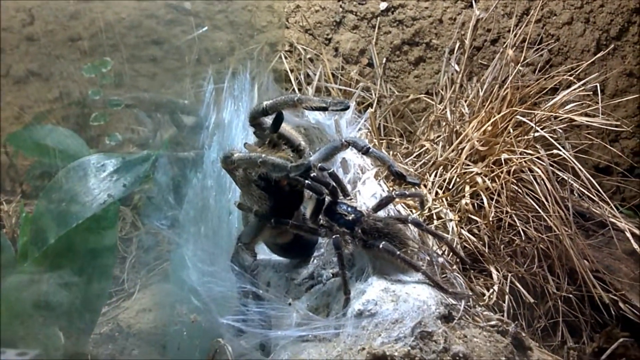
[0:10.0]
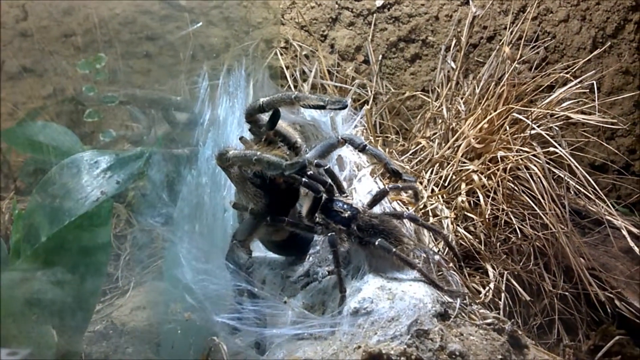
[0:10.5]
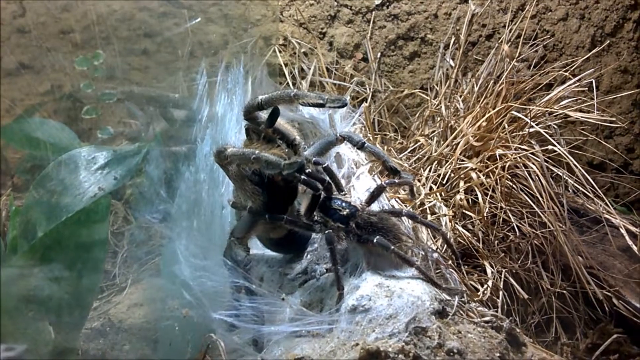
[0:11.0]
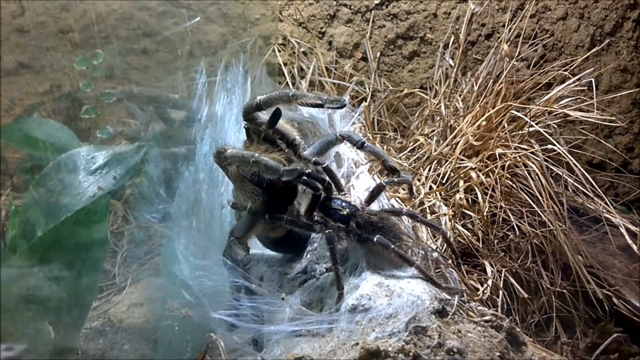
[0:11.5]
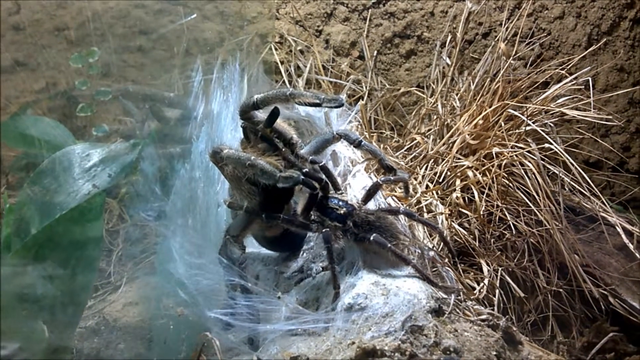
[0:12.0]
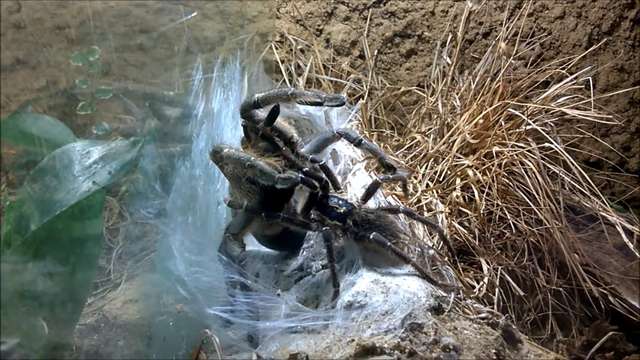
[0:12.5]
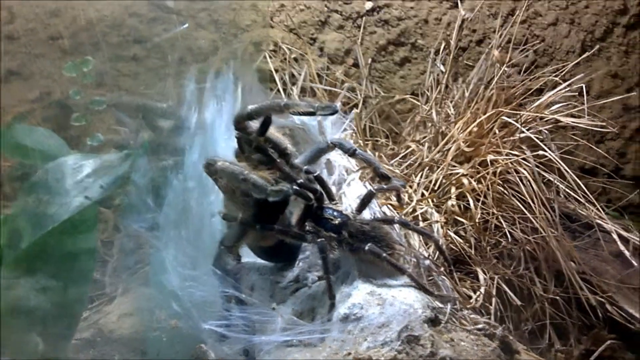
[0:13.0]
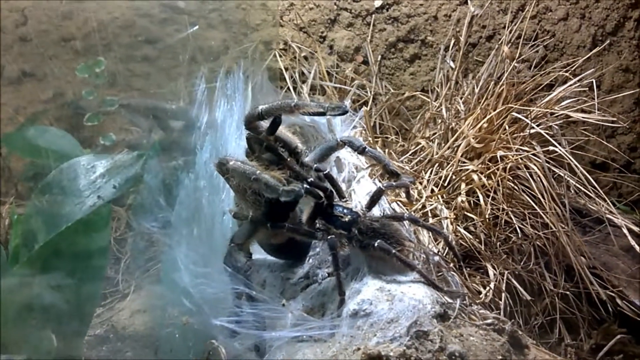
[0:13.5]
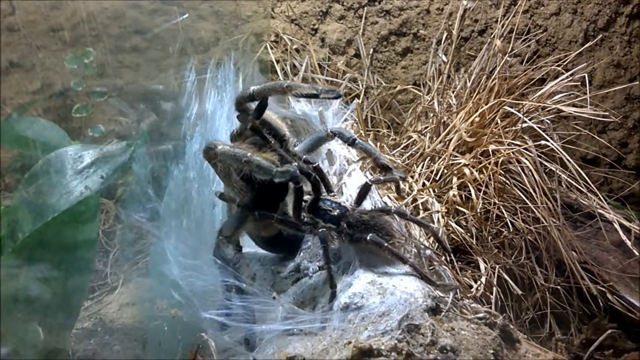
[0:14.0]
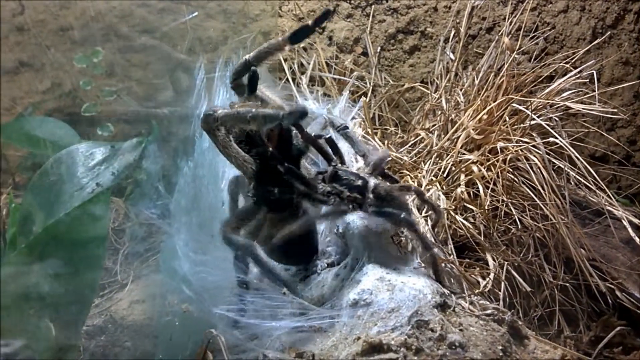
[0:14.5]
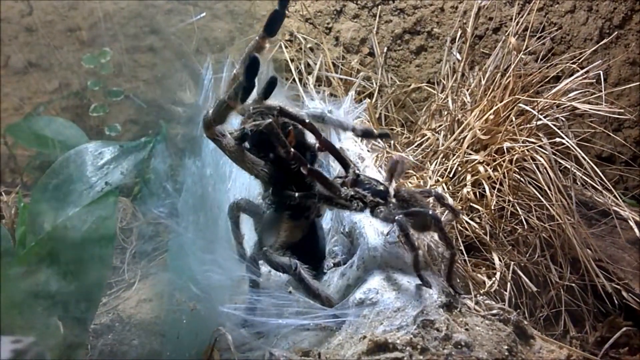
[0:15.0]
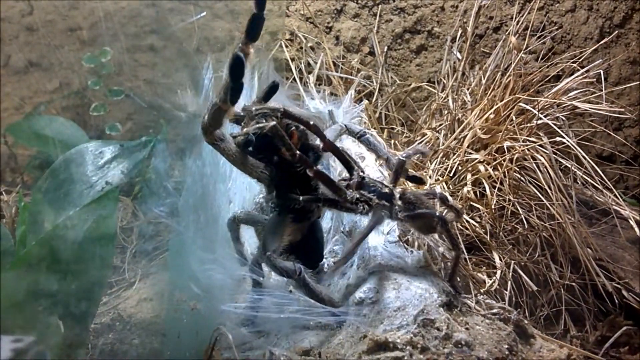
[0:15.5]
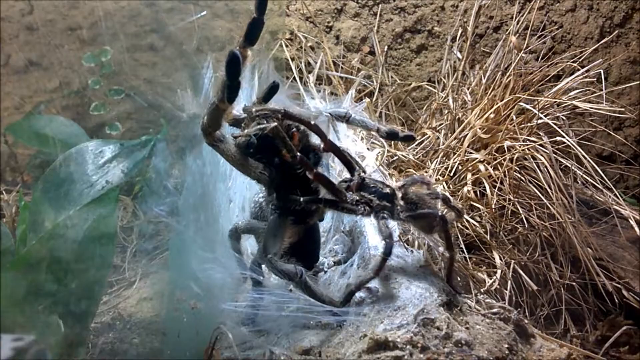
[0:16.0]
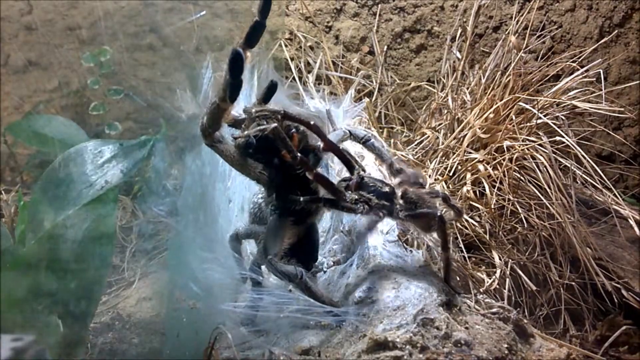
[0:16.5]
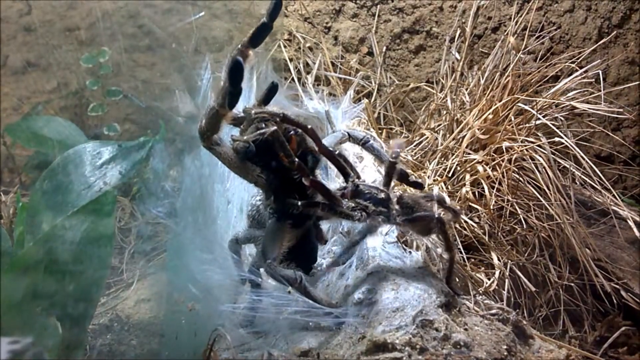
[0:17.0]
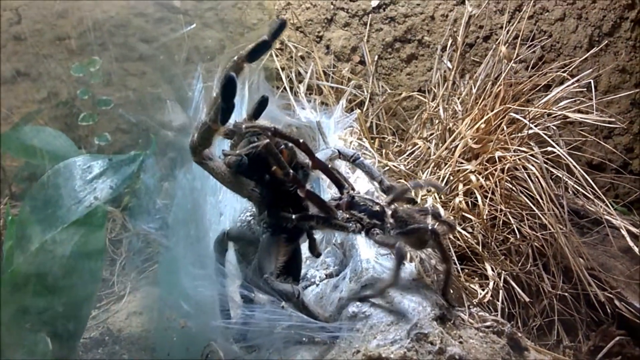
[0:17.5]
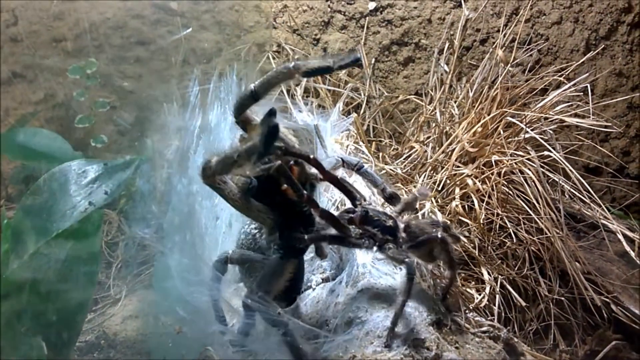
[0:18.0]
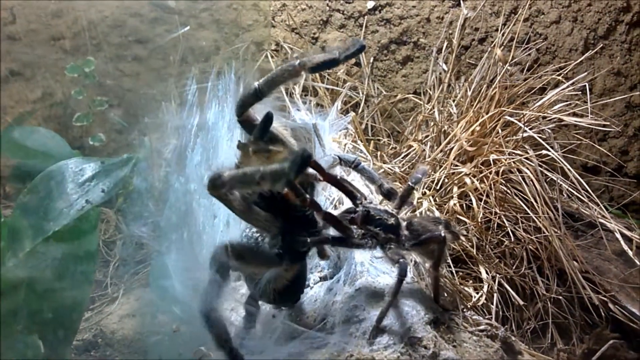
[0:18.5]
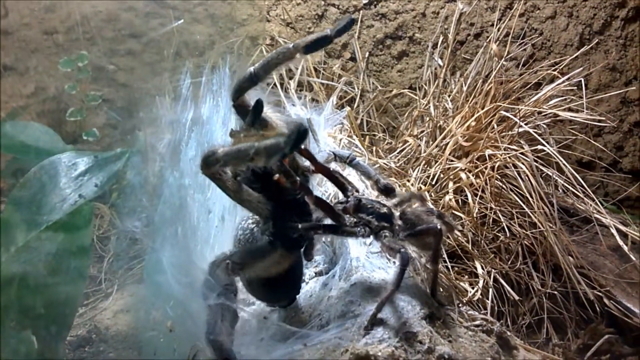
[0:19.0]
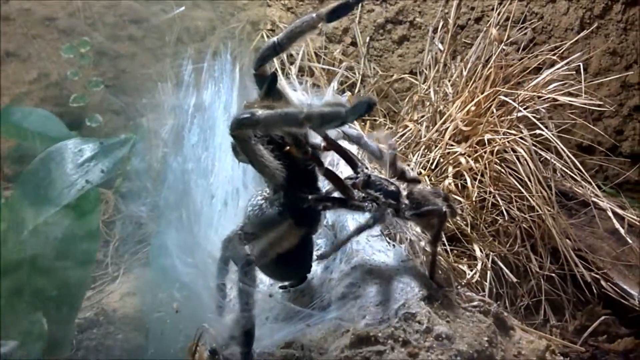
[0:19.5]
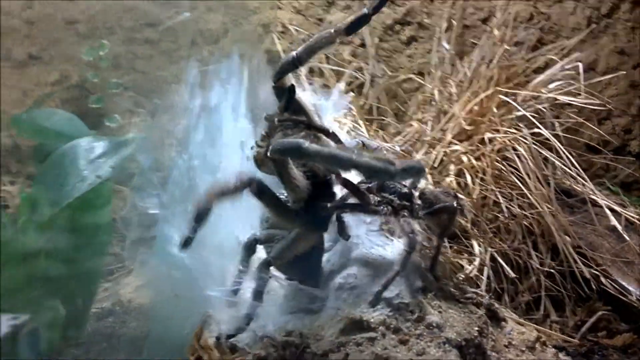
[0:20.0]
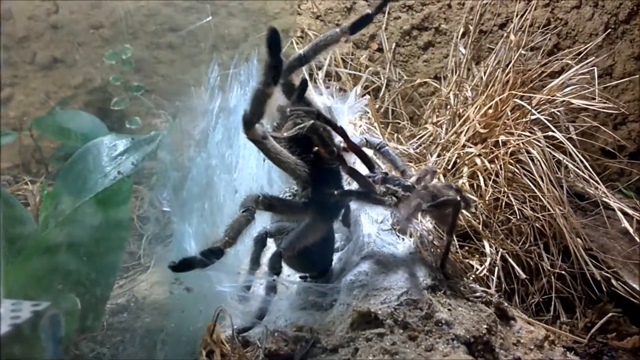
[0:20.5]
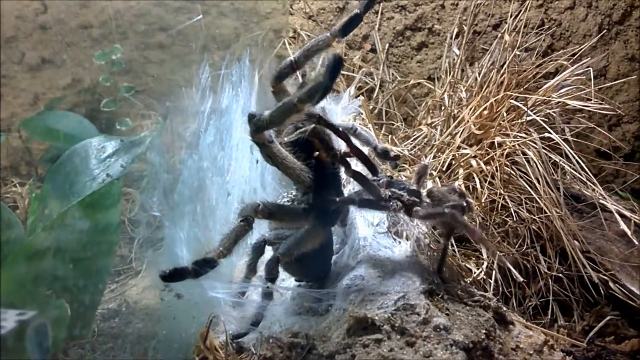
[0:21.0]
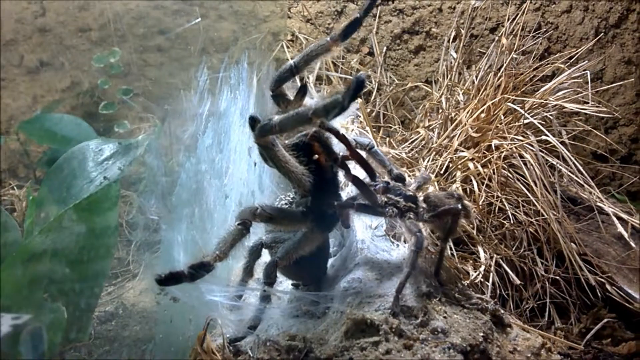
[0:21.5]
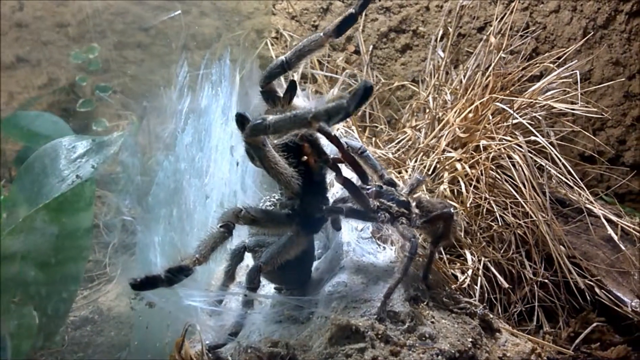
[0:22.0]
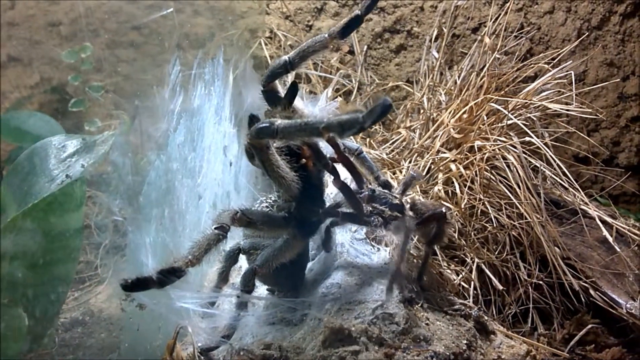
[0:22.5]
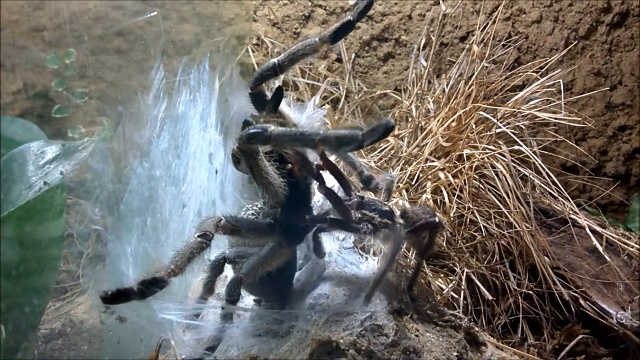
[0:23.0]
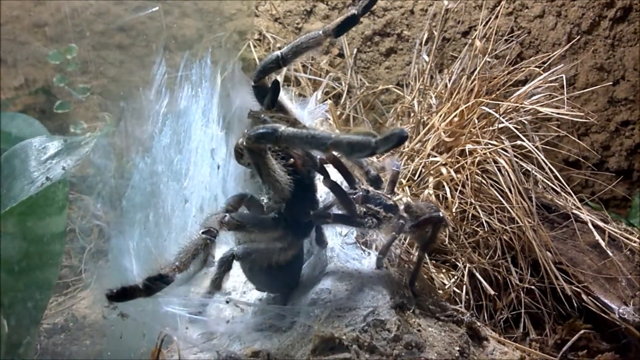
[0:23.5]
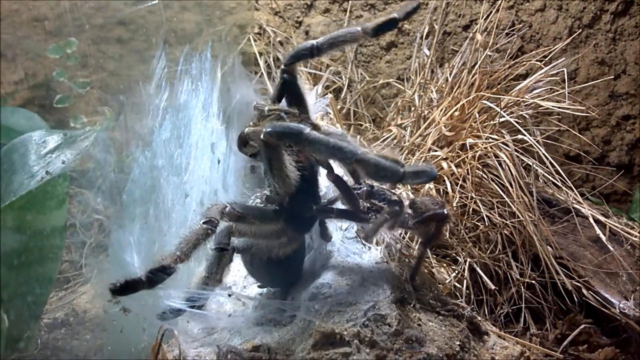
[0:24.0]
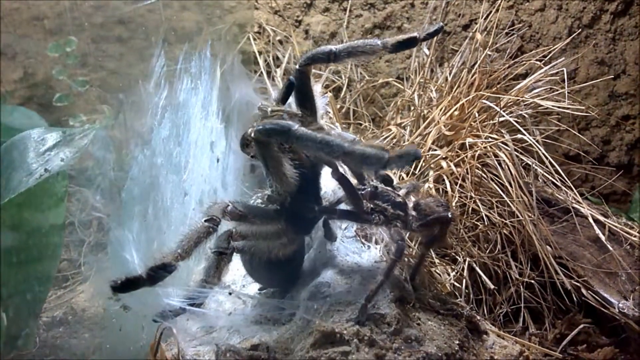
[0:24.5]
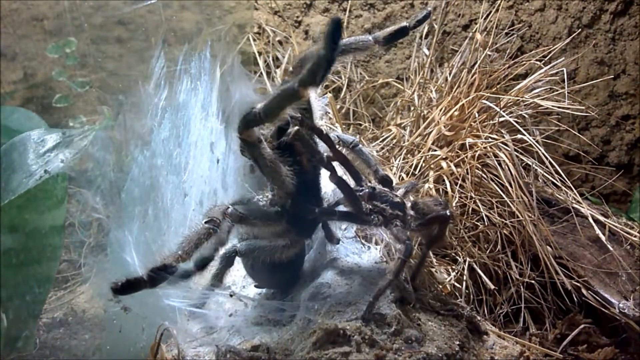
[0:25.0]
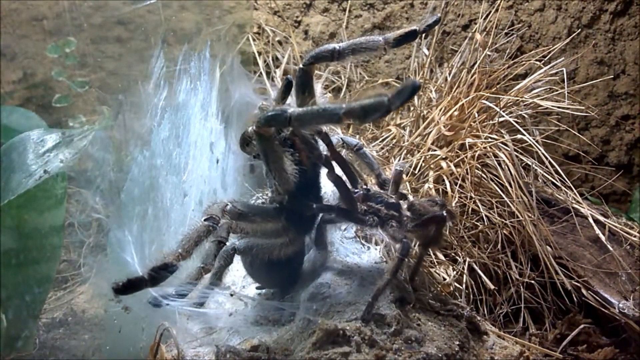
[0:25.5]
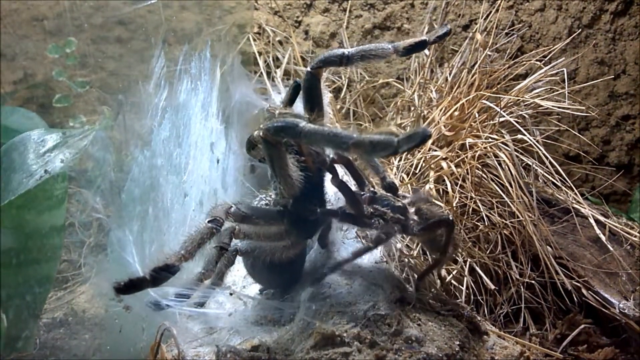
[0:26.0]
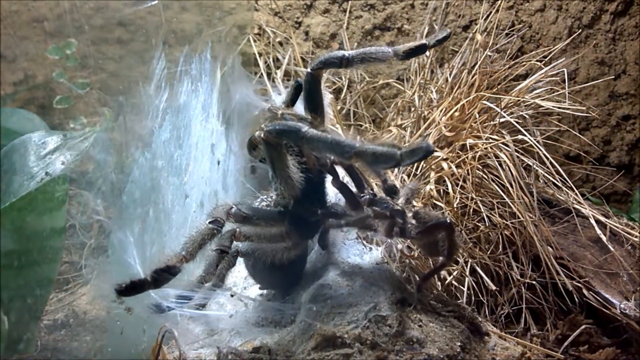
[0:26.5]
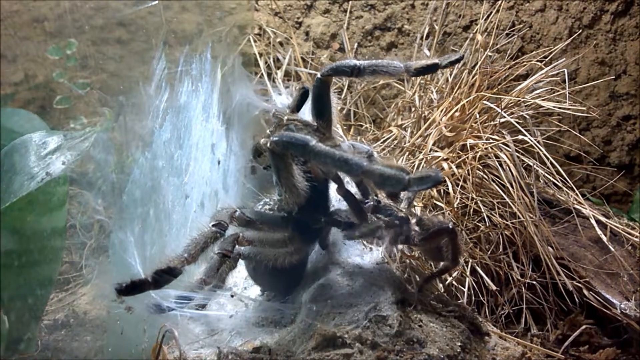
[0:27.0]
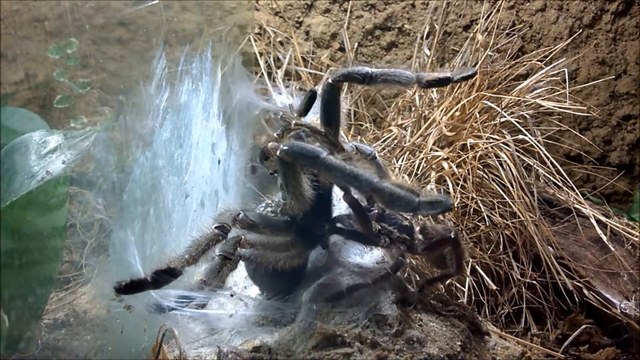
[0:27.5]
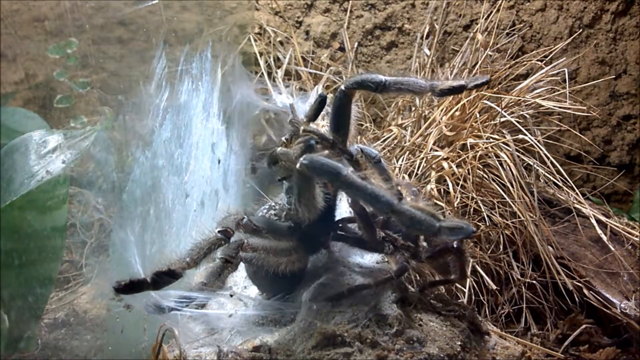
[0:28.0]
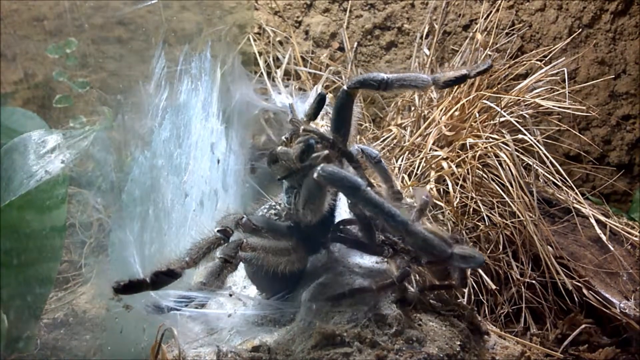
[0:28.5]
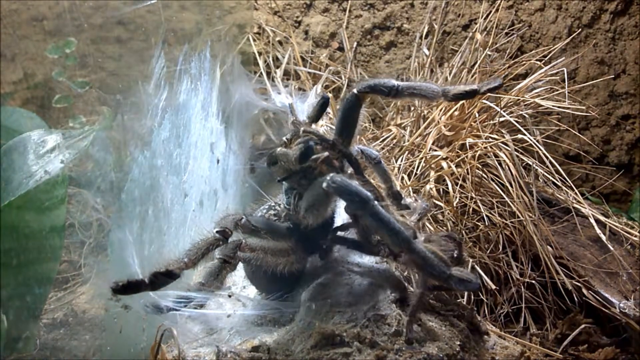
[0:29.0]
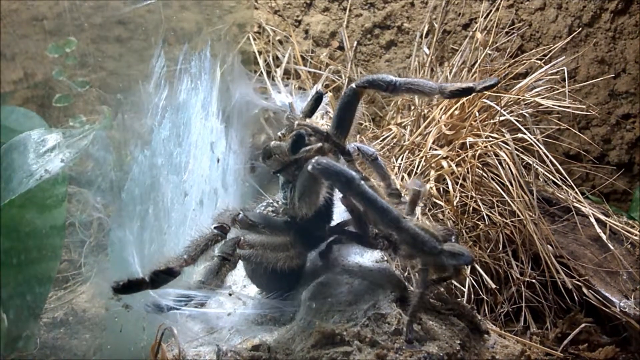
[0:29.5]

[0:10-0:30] The inside of what looks like a terrarium has a glass wall on the left side, some dirt, and dried yellow grass-like plants. Next to the window there is white webbing on the window and the ground. Two spiders appear to be fighting: a larger spider that looks to be kind of sitting upright with its back against the glass, and a smaller spider pushing its front legs into it. They seem to take a break, sitting still for a moment, then suddenly get back up as the larger spider tries to move itself out of the smaller spider's grasp. The smaller spider's two front legs are kind of holding what looks like the larger spider's head while its other legs twitch. The larger spider then kind of pushes off the window and almost falls on top of the smaller spider, which tries to push it off.